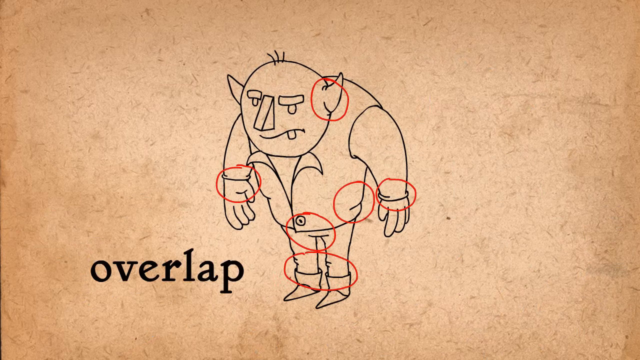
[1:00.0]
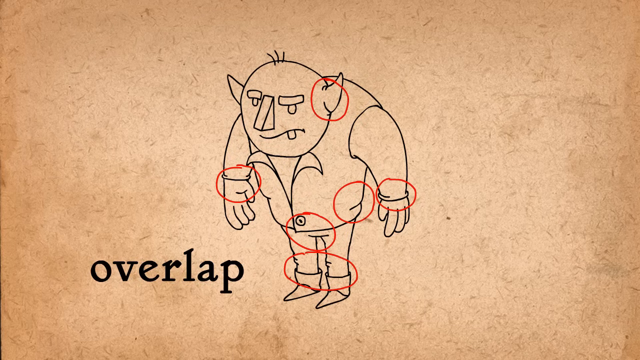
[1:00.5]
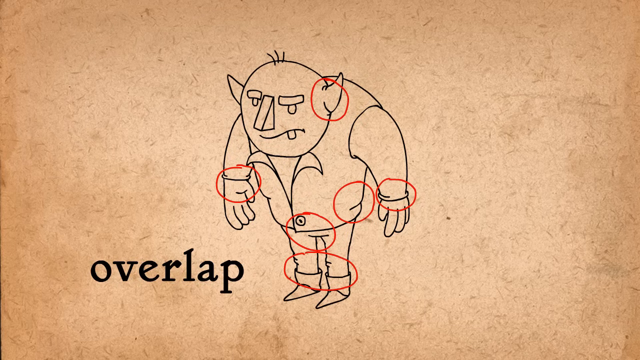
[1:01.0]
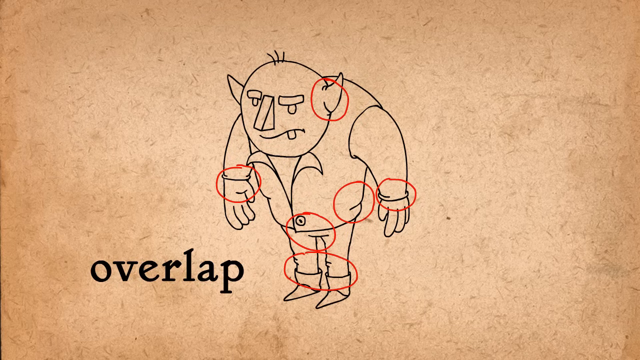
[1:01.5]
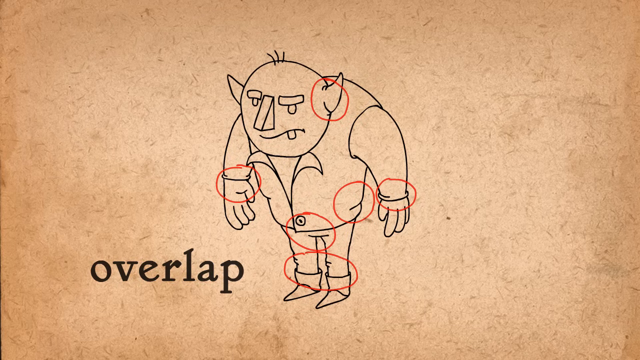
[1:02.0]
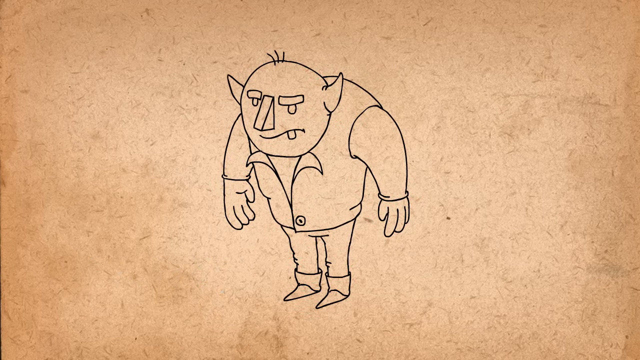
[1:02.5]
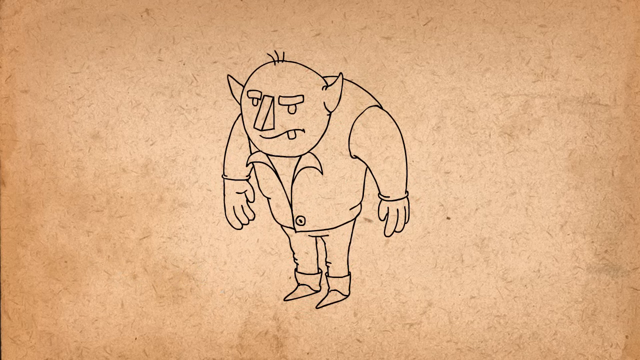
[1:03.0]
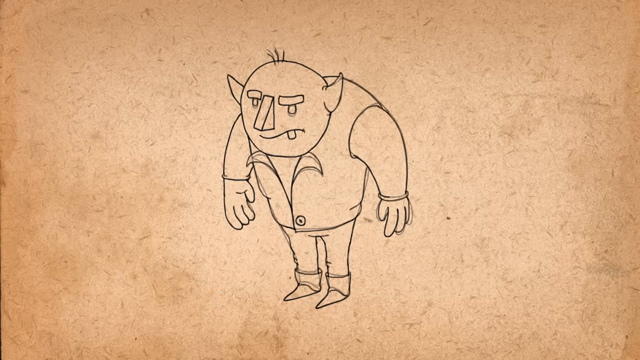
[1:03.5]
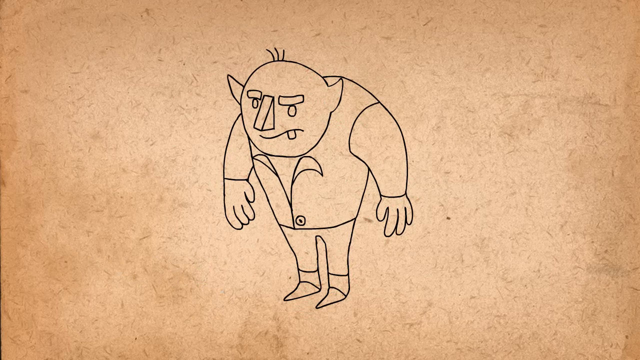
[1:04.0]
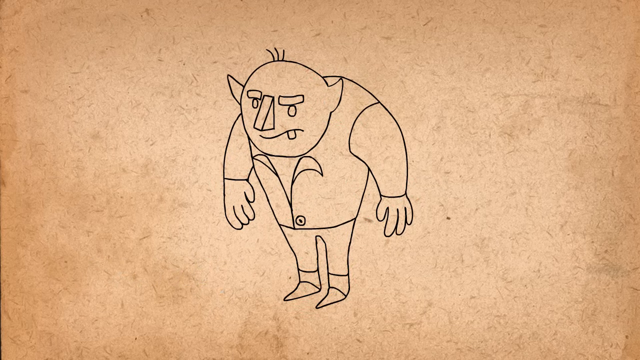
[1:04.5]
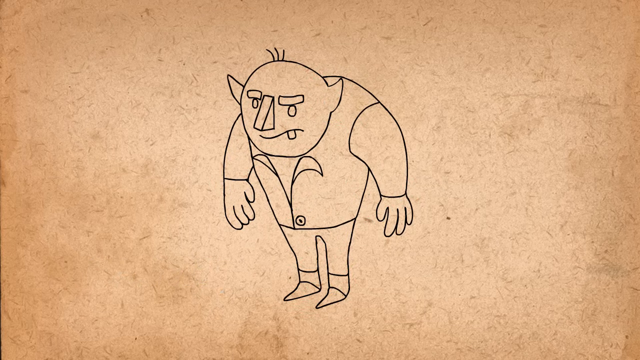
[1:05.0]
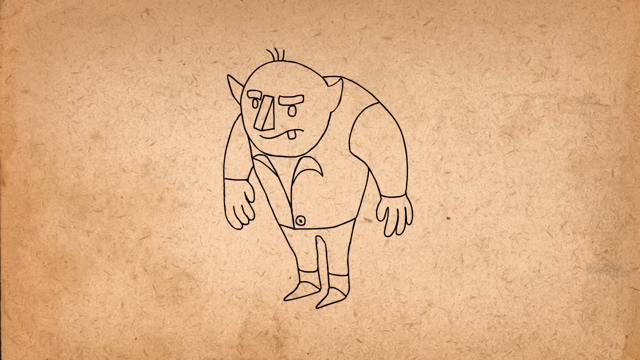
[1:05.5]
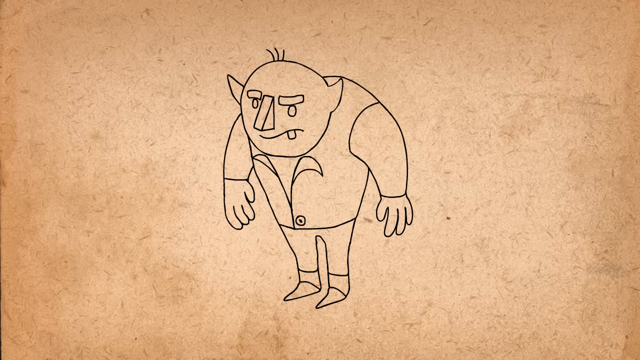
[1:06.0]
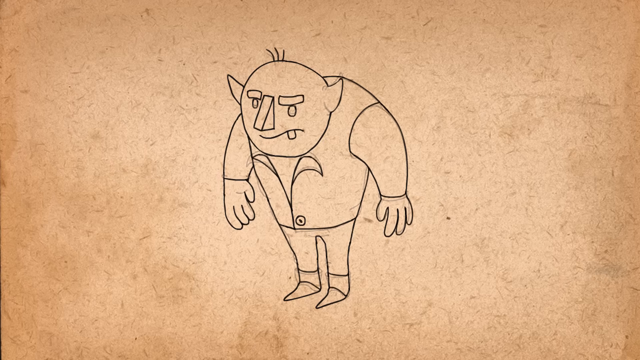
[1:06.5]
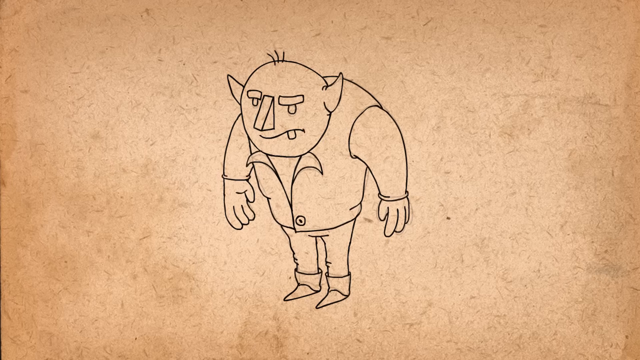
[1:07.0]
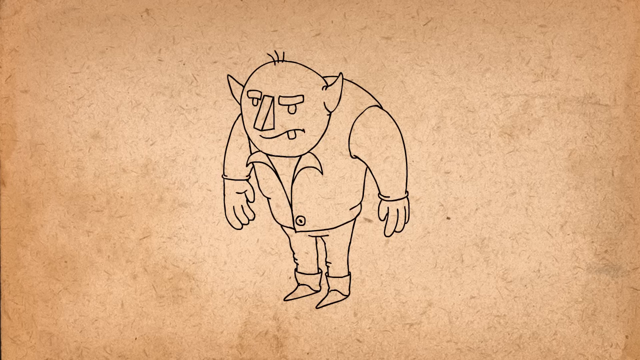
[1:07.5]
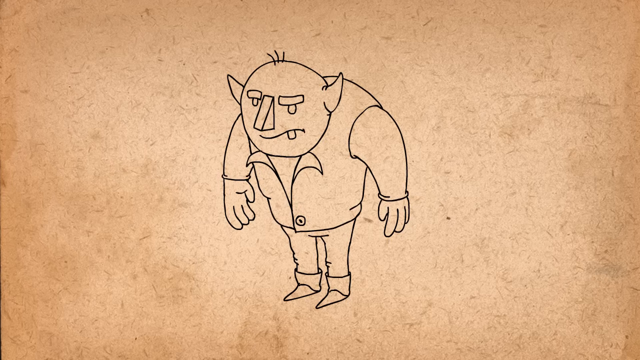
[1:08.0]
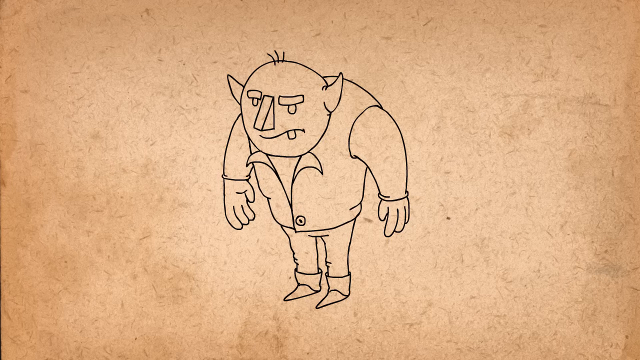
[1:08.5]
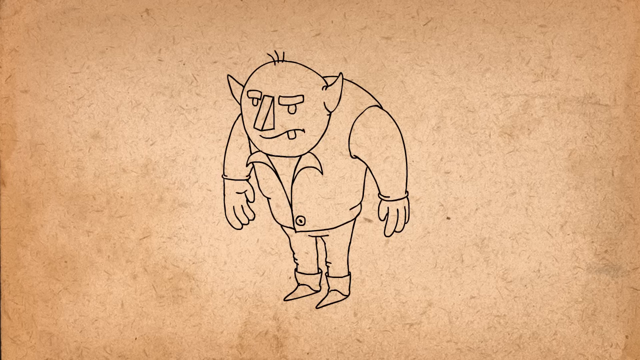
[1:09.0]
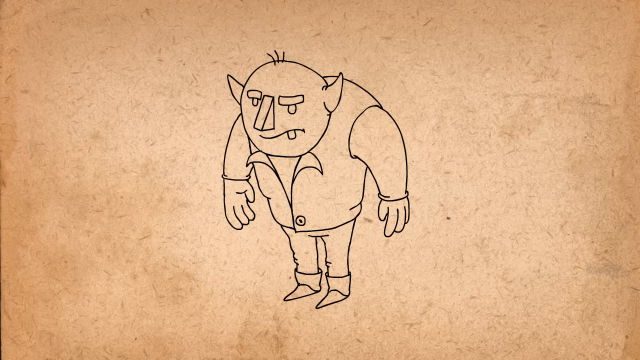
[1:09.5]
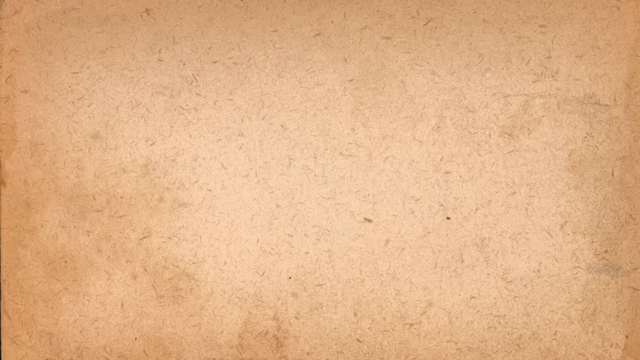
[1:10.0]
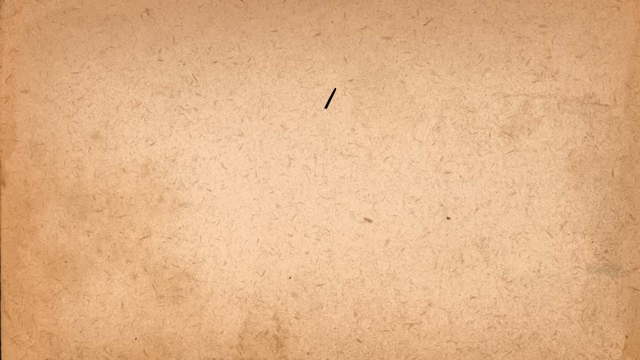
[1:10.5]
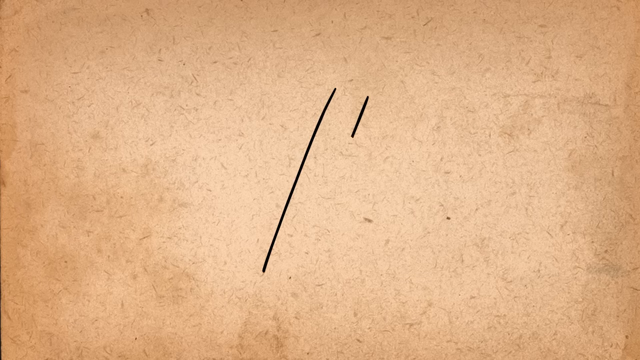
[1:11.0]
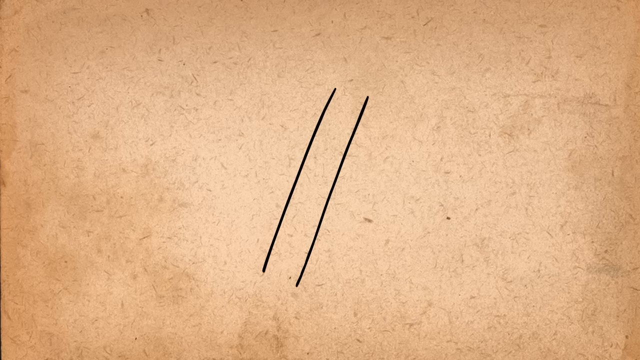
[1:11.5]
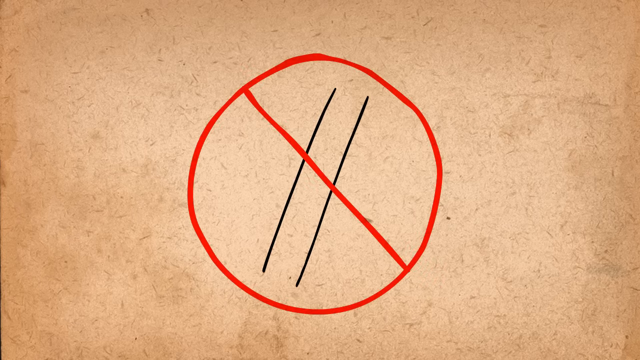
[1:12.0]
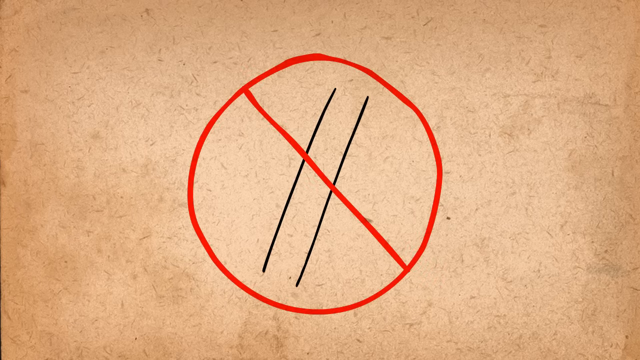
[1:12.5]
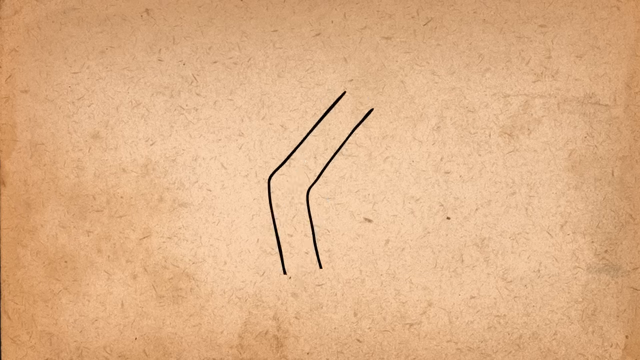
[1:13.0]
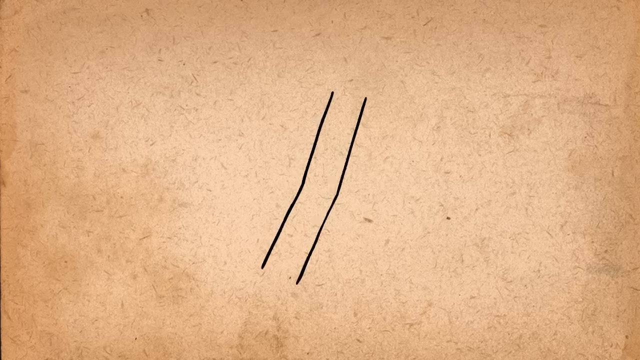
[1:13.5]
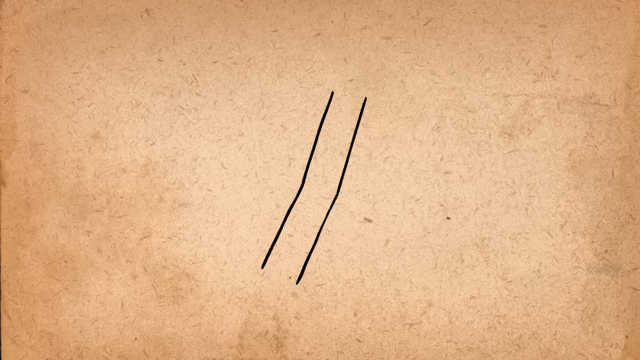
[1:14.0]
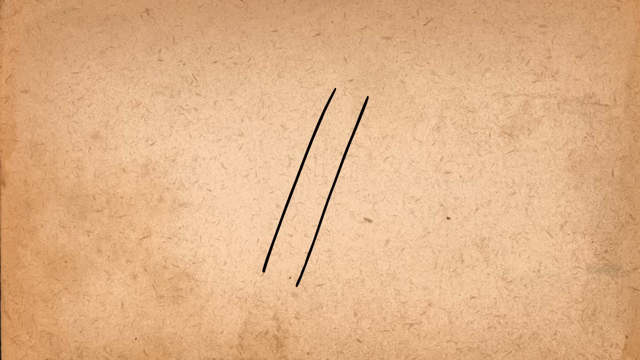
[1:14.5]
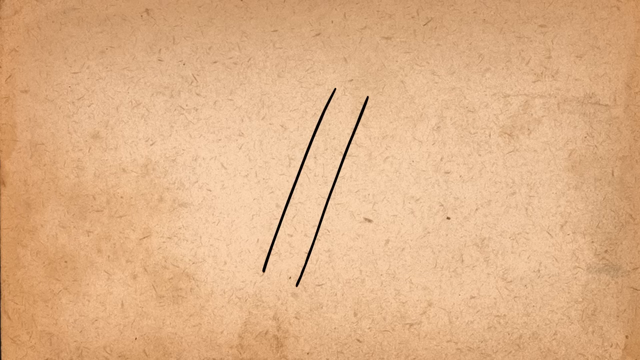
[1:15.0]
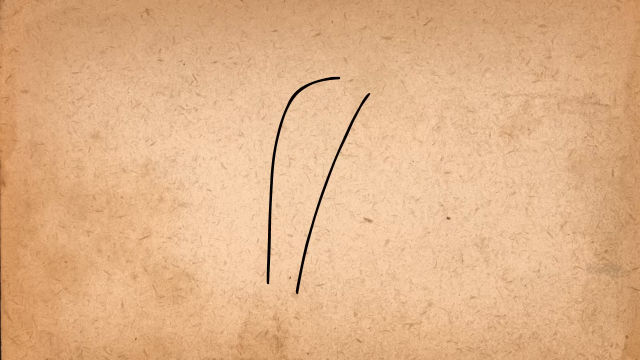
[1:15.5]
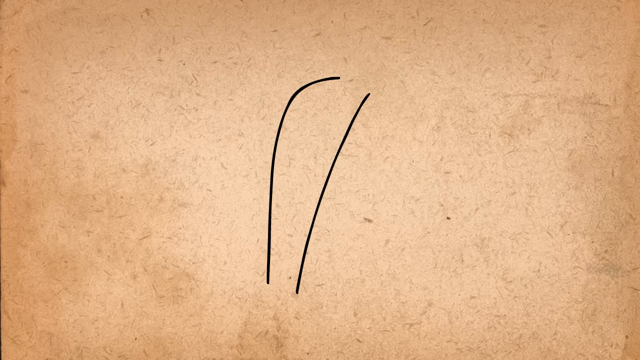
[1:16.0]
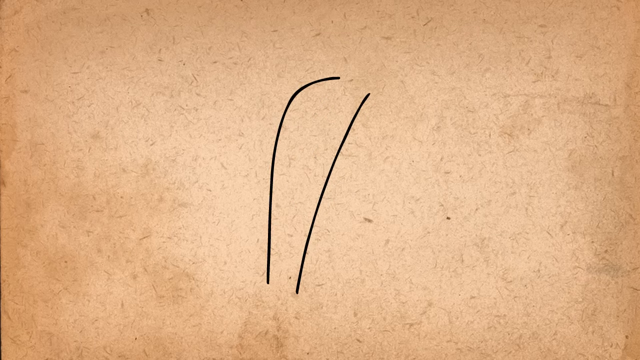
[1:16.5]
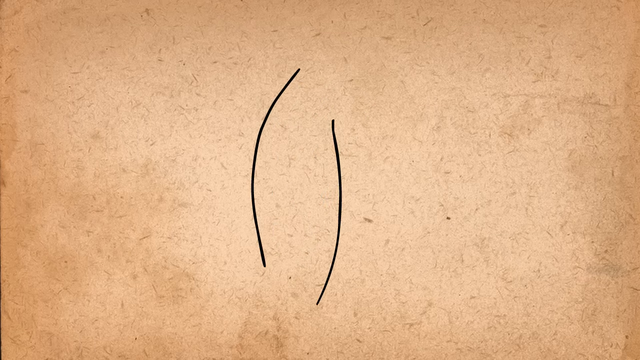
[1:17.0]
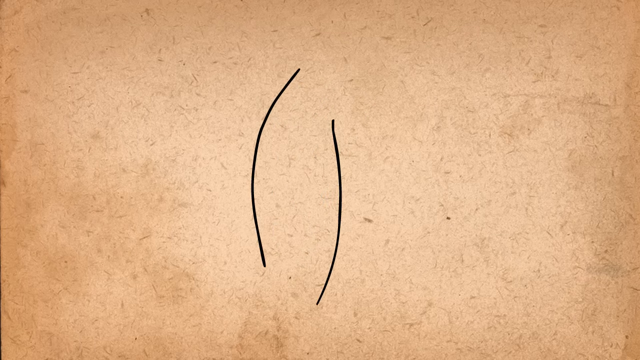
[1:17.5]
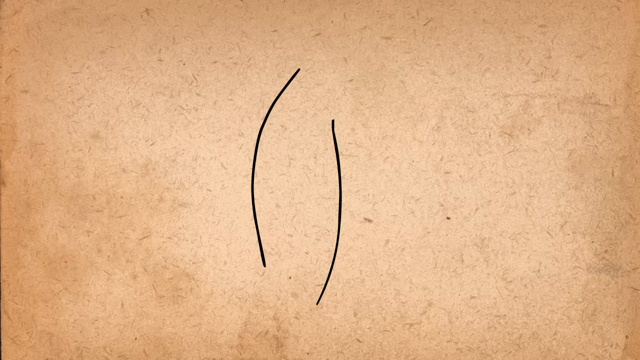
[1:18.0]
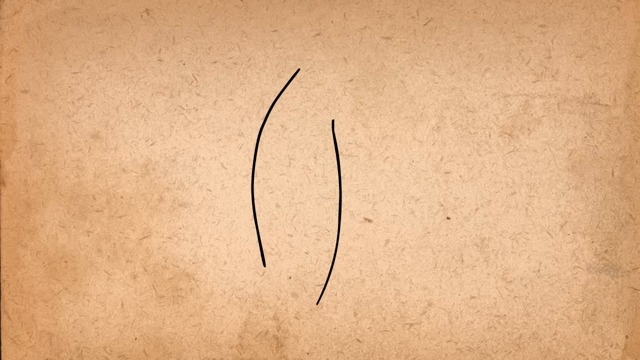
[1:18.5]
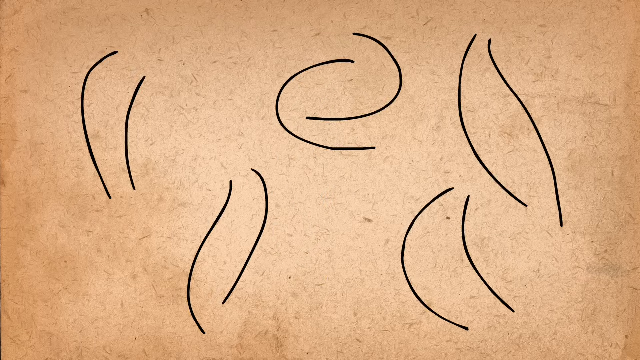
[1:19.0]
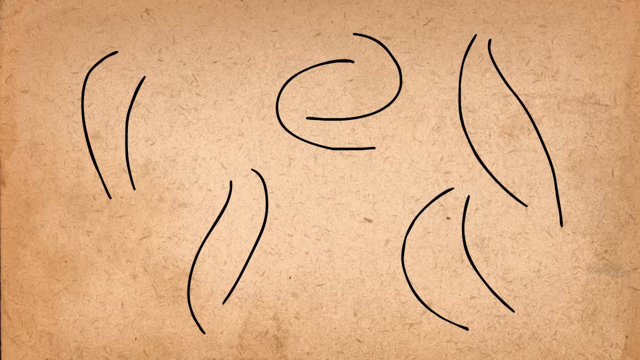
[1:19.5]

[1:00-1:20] Still in the solid drawing section, a hunchback creature appears with a big nose, big eyebrows and pointy ears. It wears an open, sleeveless shirt, long pants and boots that are pointed at the front. It has half of a smile, with one tooth sticking out from it. In front of it, to the viewer's left, dark black letters read "overlap." Circles mark places where parts overlap, such as the ears to the shoulders.